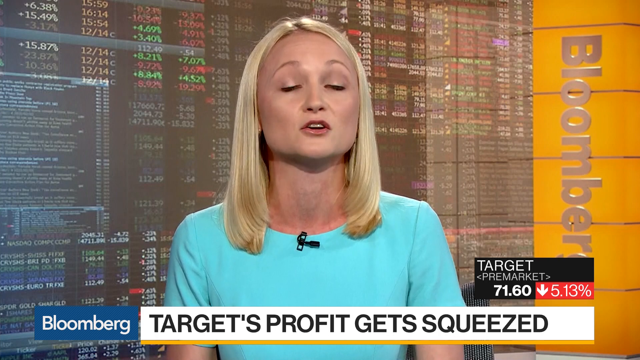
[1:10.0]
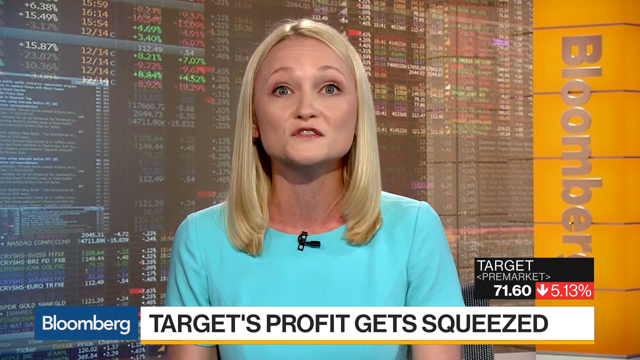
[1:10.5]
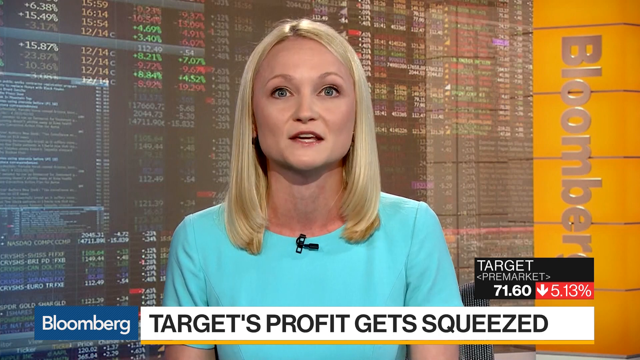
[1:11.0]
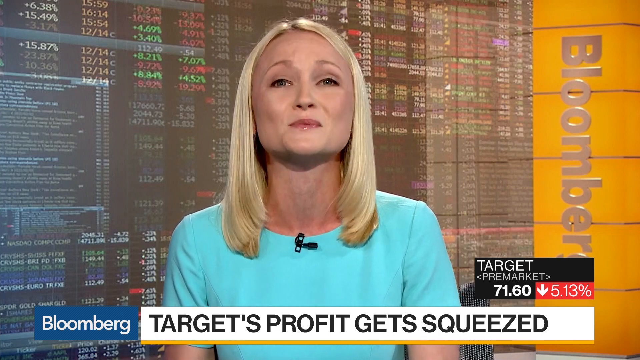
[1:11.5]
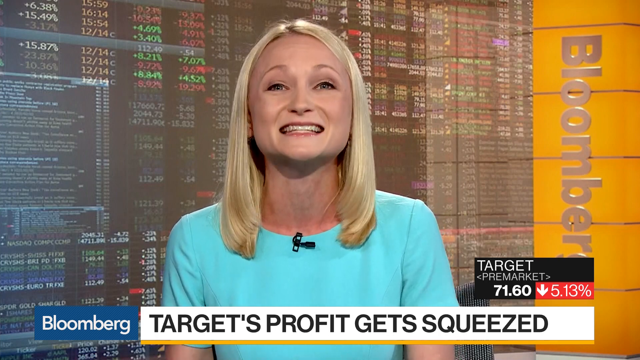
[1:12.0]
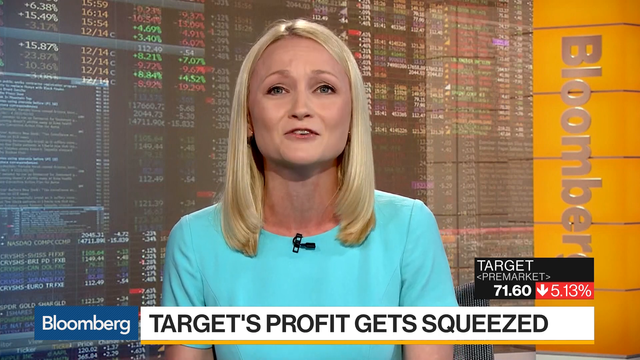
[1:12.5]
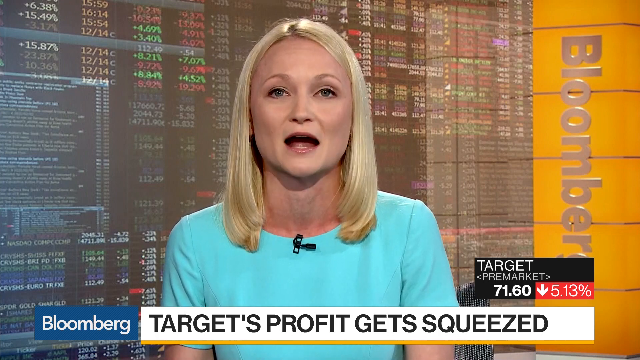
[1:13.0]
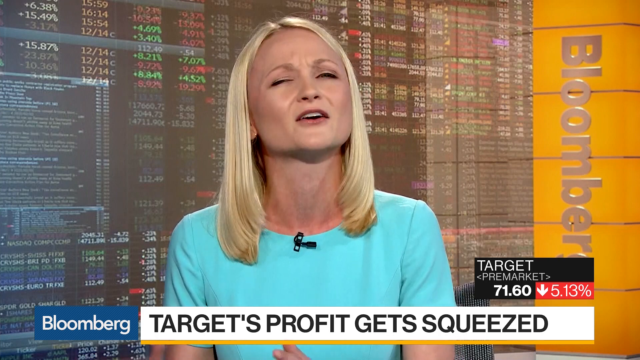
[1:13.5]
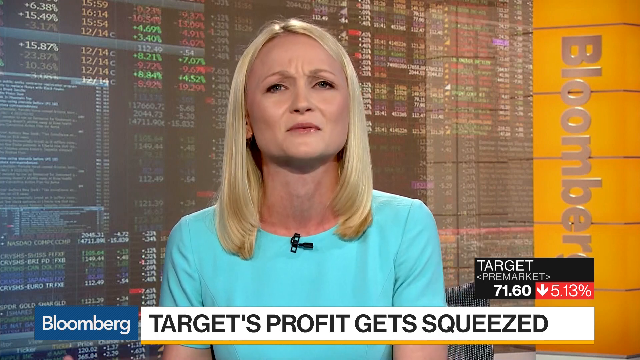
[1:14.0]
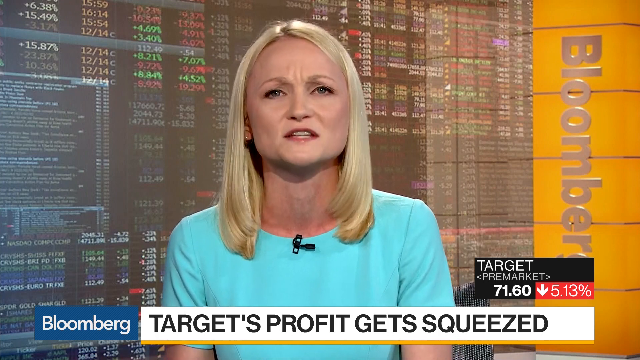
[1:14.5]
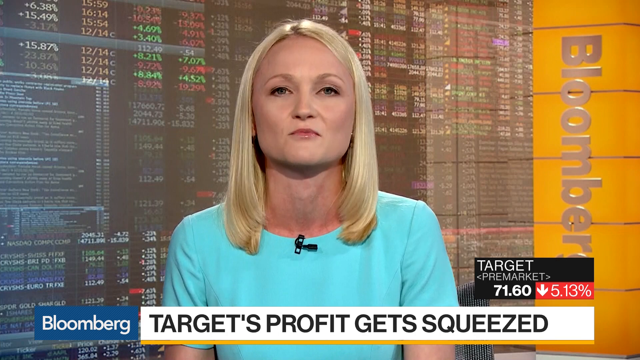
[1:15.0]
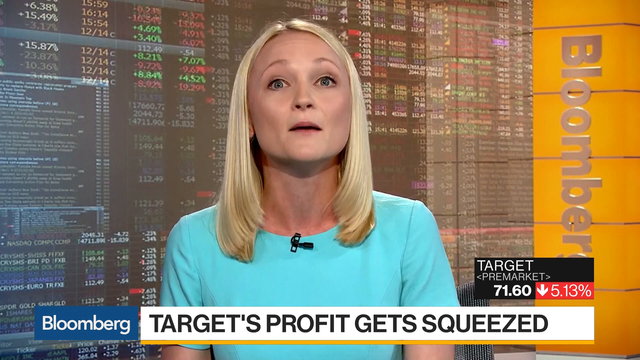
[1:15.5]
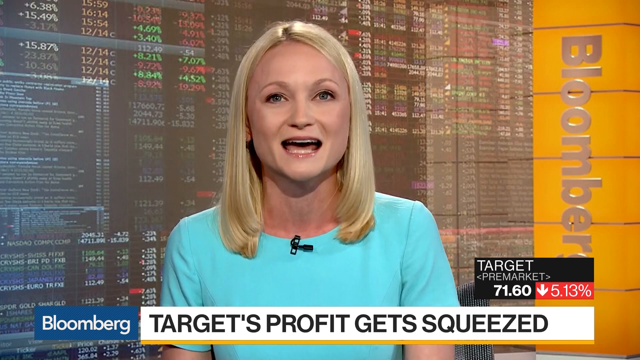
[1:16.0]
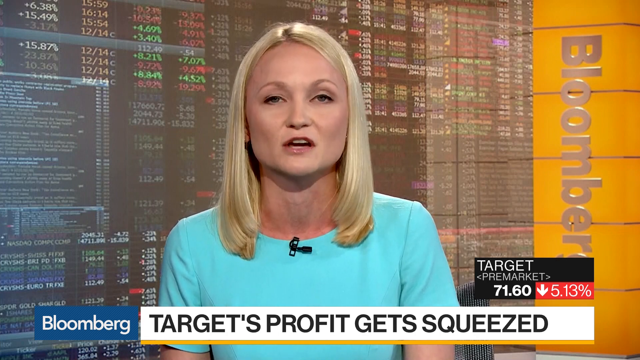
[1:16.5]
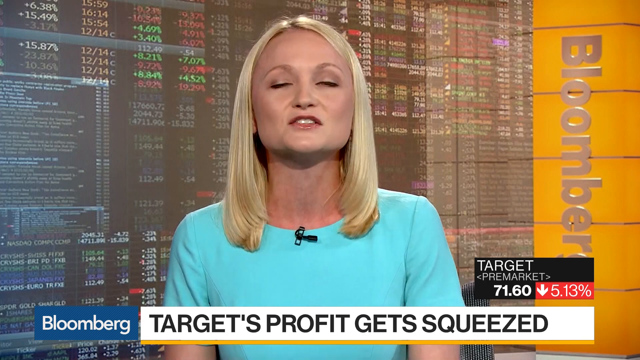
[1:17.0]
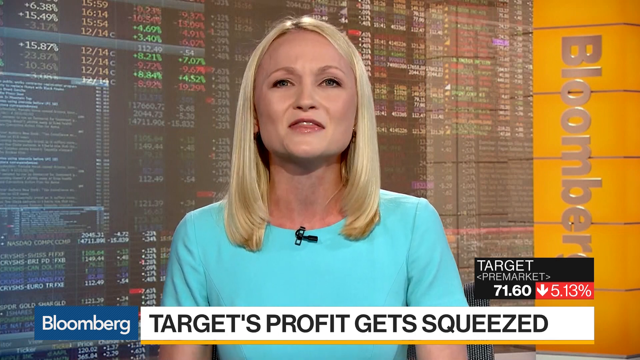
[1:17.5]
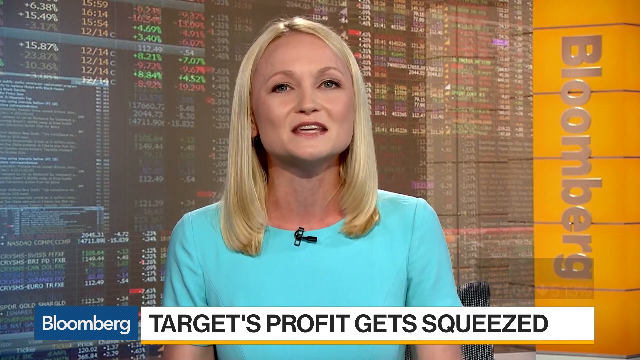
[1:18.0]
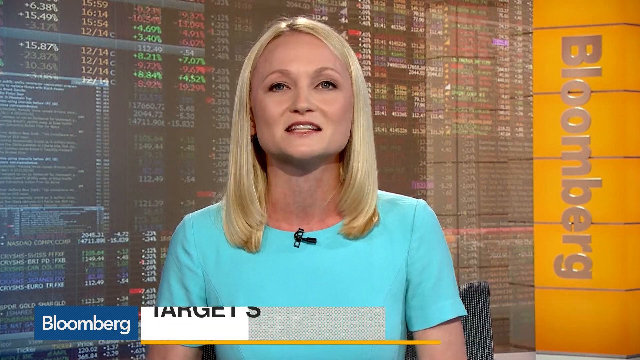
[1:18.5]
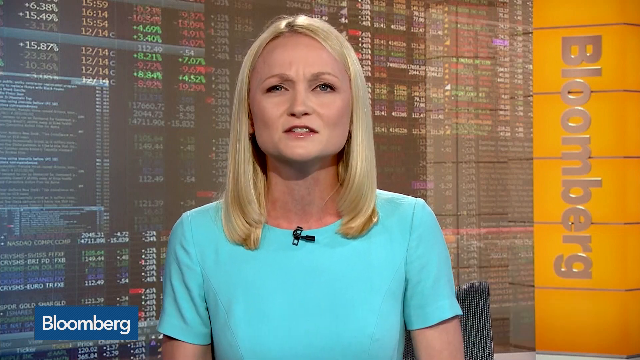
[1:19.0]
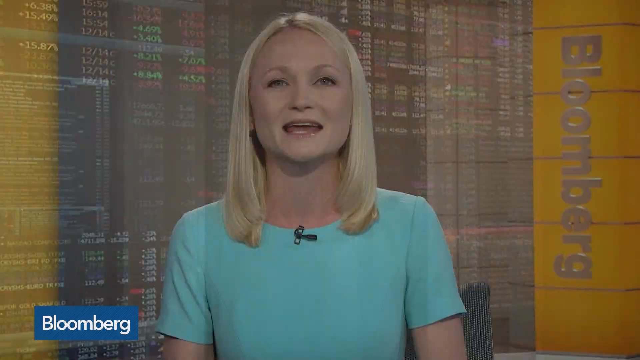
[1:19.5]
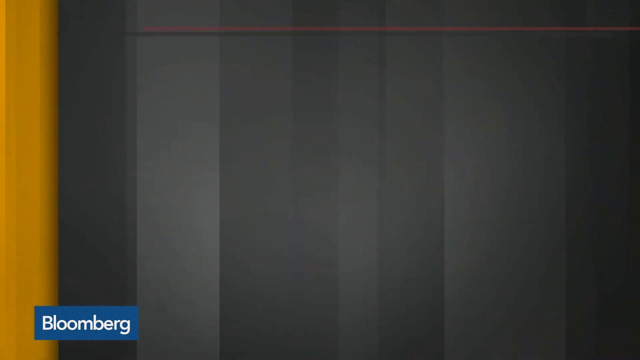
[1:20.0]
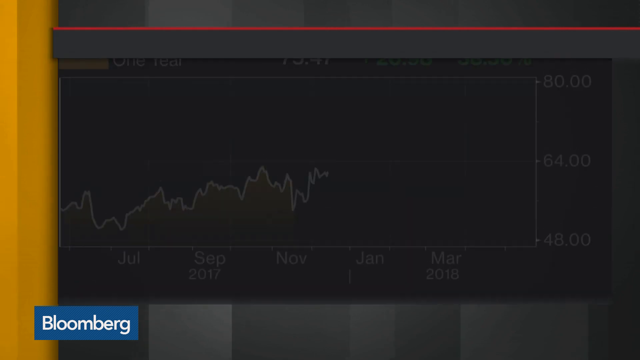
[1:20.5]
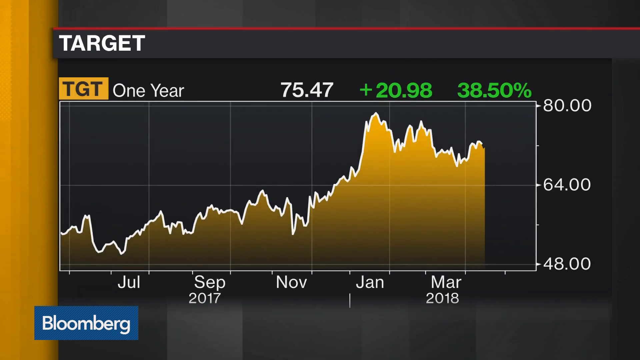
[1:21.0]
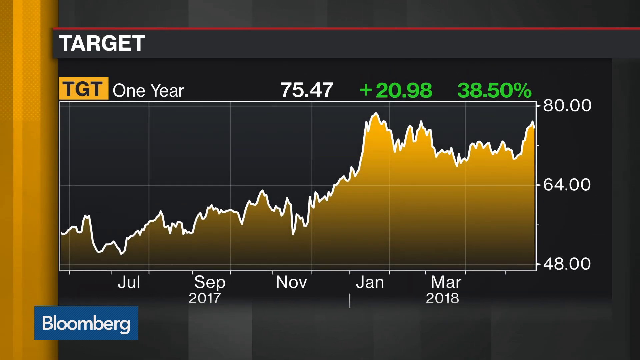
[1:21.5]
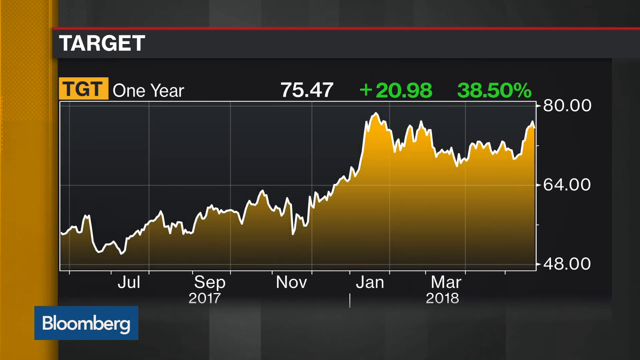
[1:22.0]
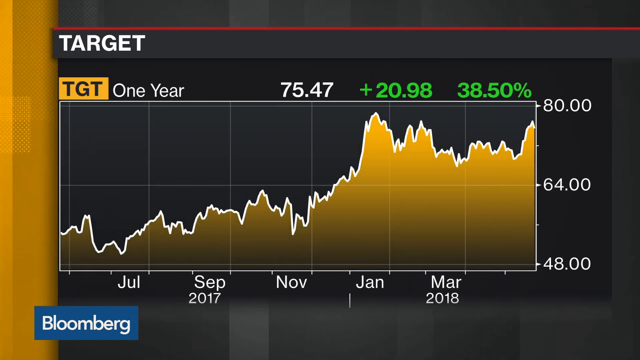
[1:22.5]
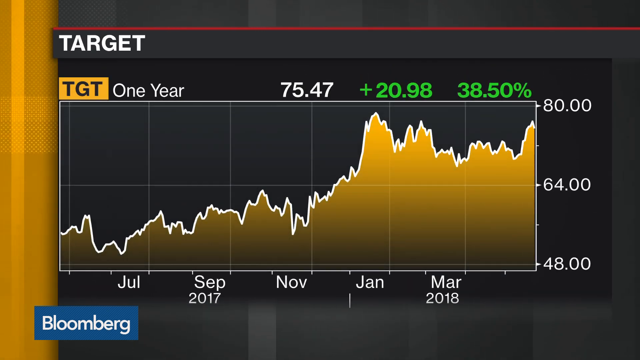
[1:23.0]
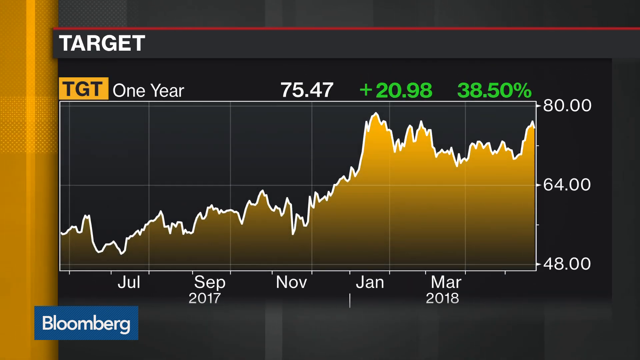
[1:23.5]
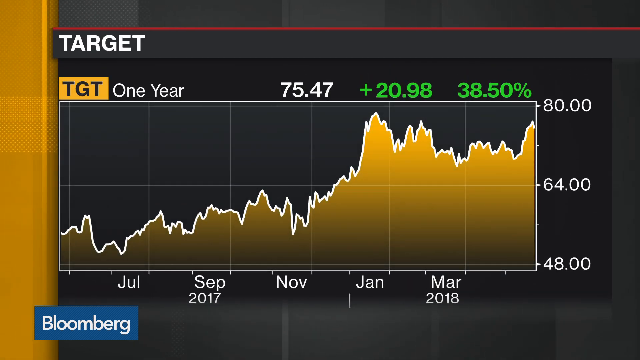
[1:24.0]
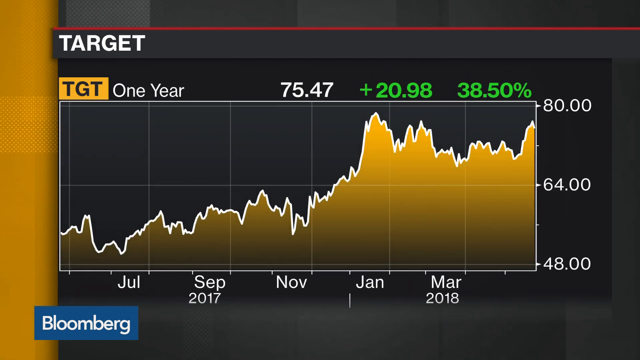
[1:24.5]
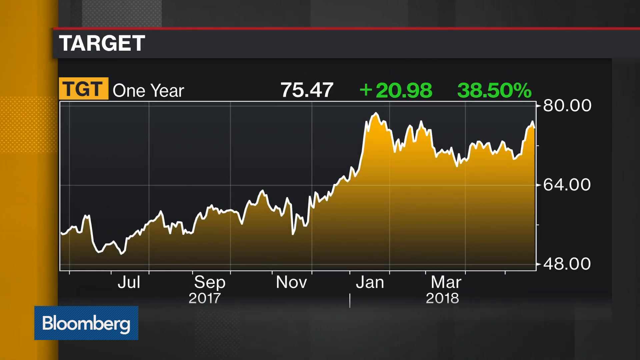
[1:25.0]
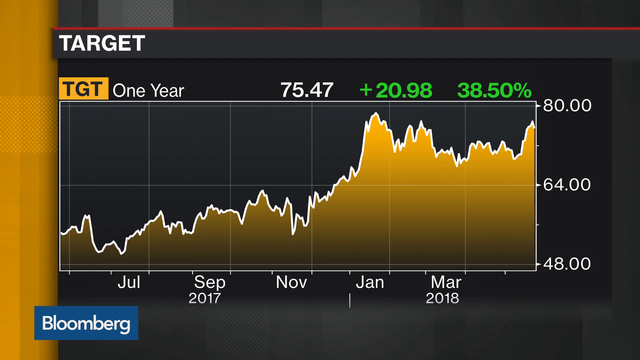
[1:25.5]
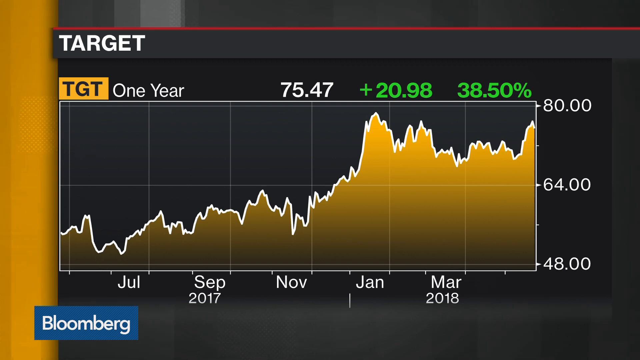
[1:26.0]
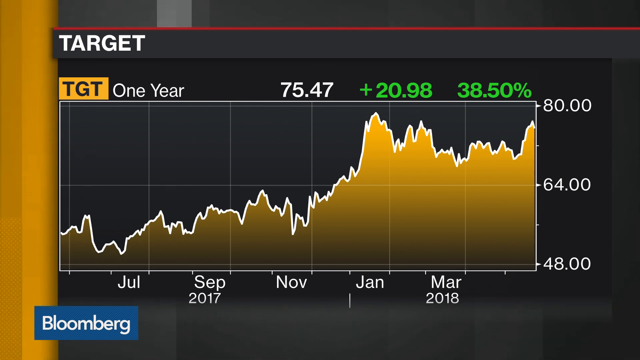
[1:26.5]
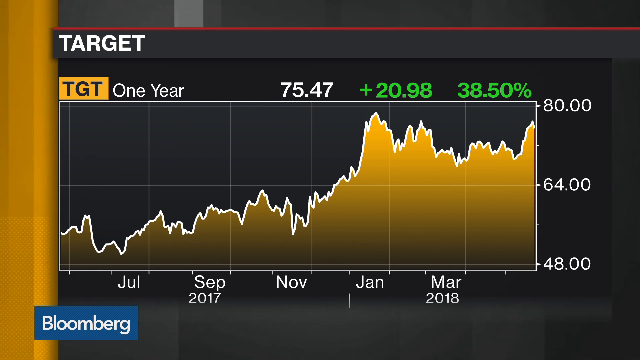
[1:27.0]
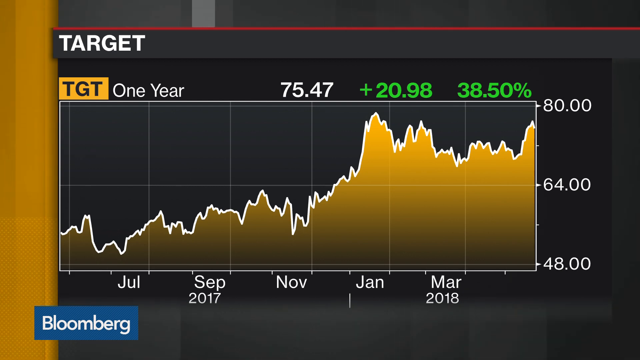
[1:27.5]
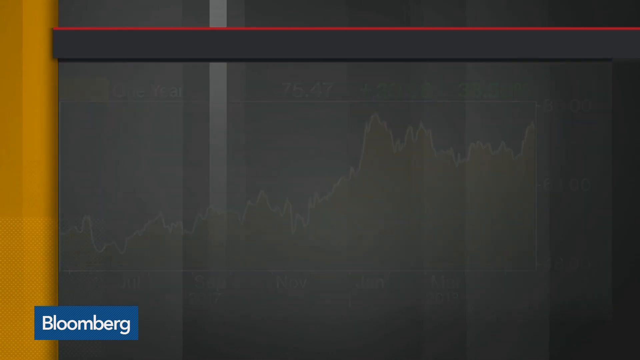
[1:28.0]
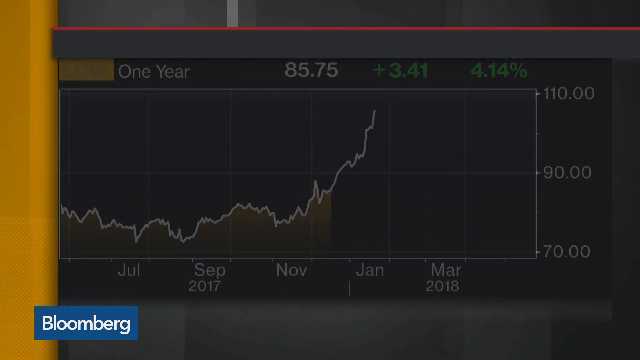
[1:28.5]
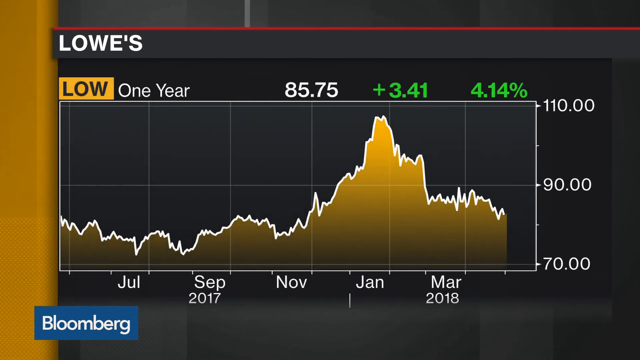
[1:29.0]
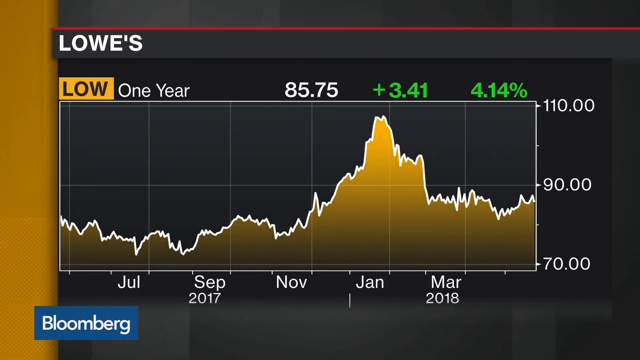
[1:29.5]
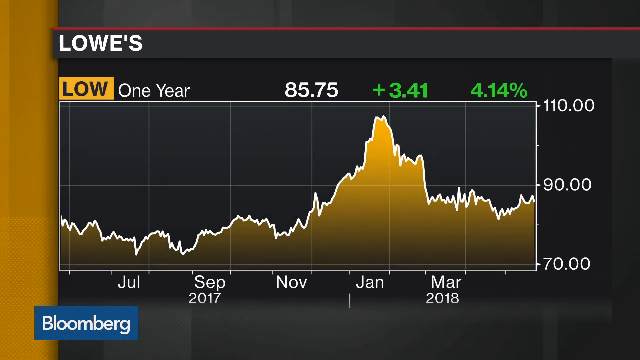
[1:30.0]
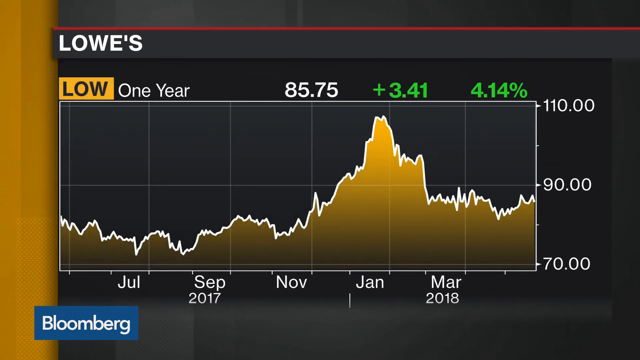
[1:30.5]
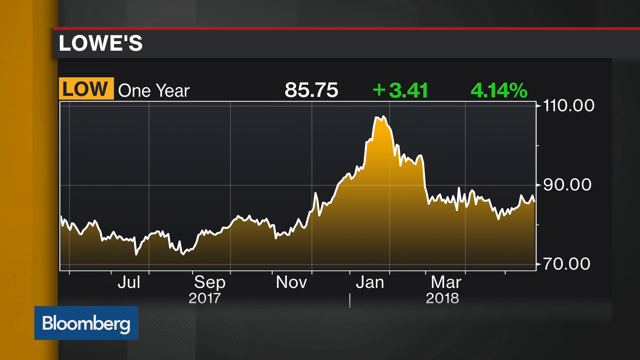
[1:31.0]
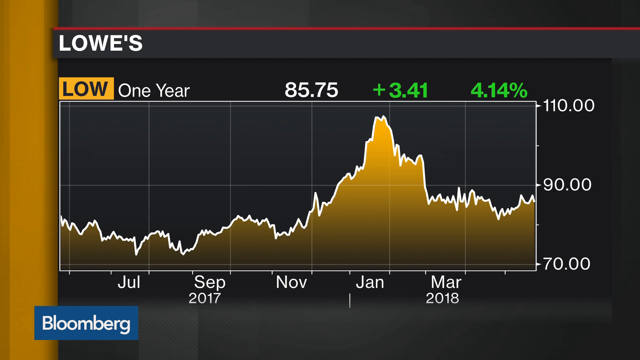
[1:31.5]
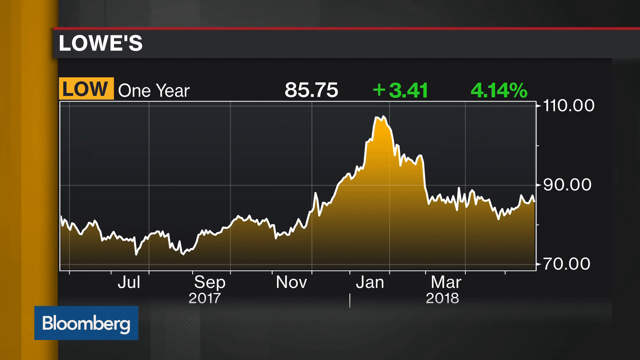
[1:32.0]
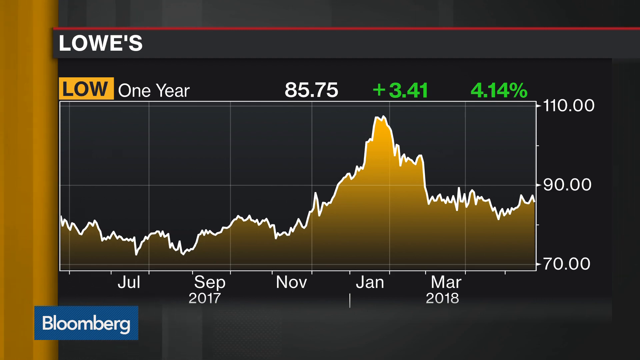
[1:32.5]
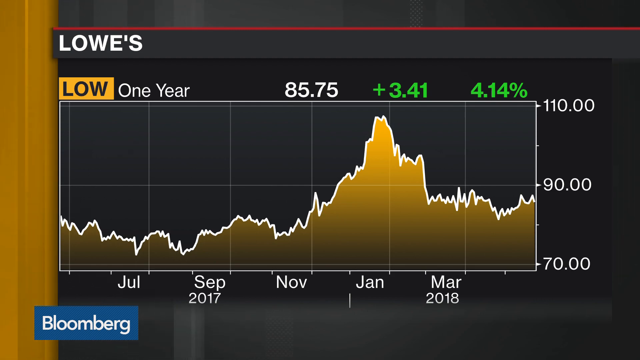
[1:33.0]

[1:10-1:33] The blonde woman in the light blue dress, with the black microphone attached to the front of her dress, continues commenting on the Bloomberg report. She sits in front of a screen showing stock market reports, staring straight into the camera and speaking directly to it. The next scene is another graph, this one on Target, showing "TGT" over one year: the line shoots up in January 2018 and stays elevated through April 2018. The graph remains on screen, and then it switches to Lowe's, with a graph of the rise and fall of Lowe's.